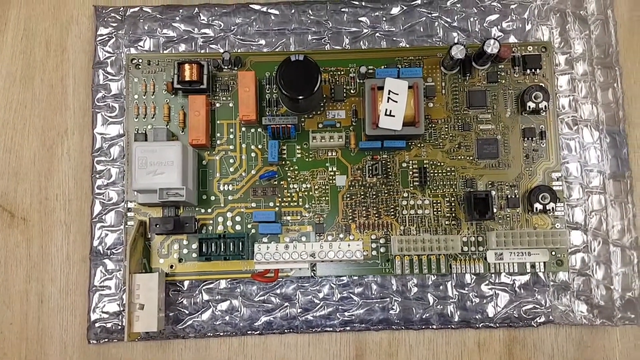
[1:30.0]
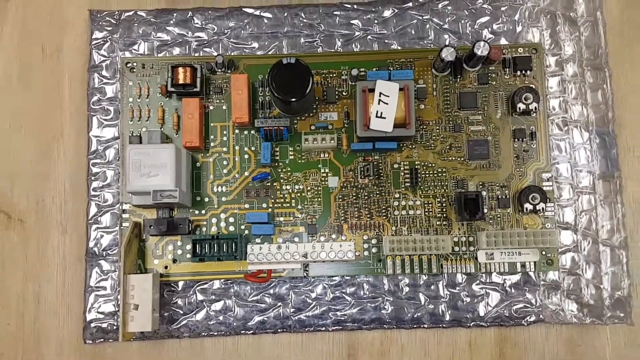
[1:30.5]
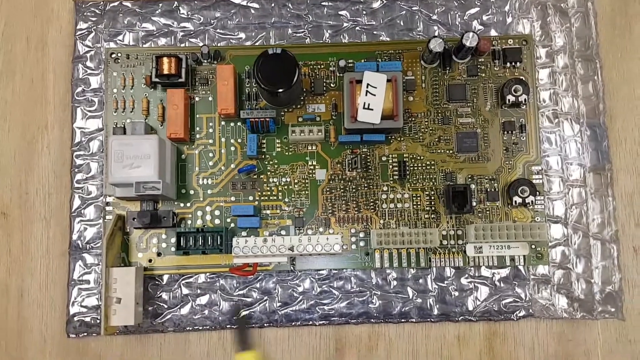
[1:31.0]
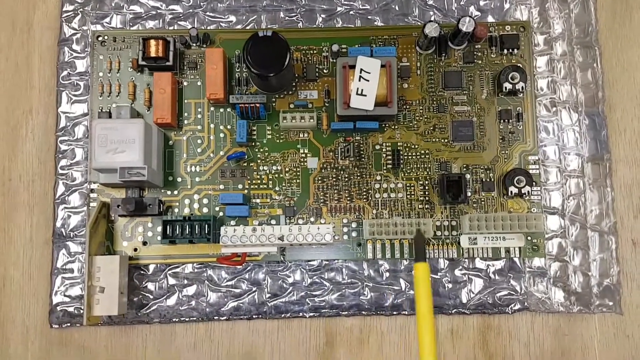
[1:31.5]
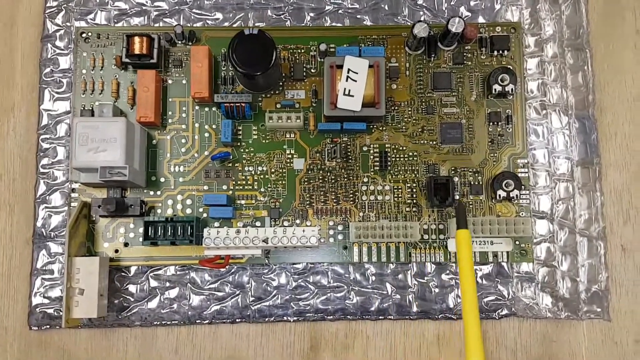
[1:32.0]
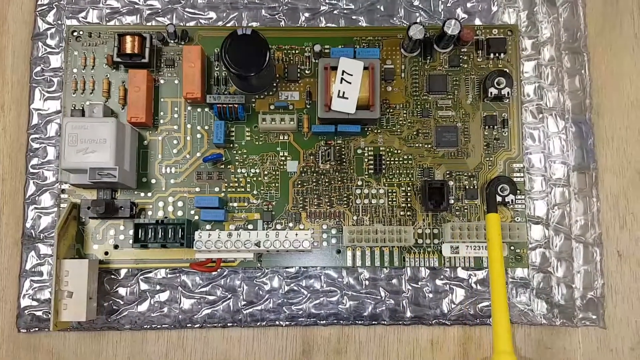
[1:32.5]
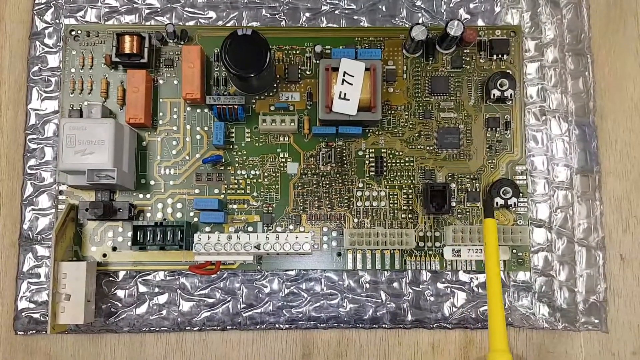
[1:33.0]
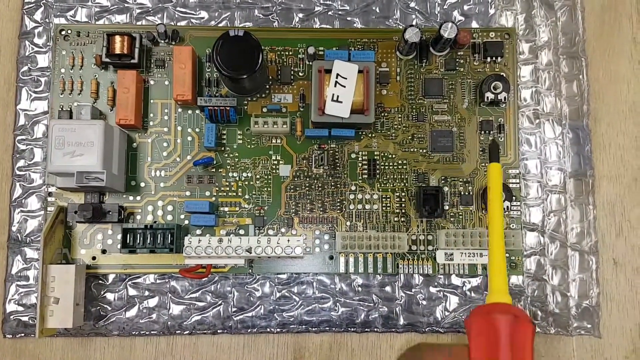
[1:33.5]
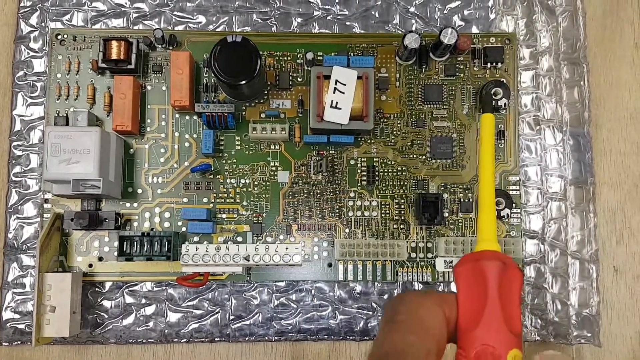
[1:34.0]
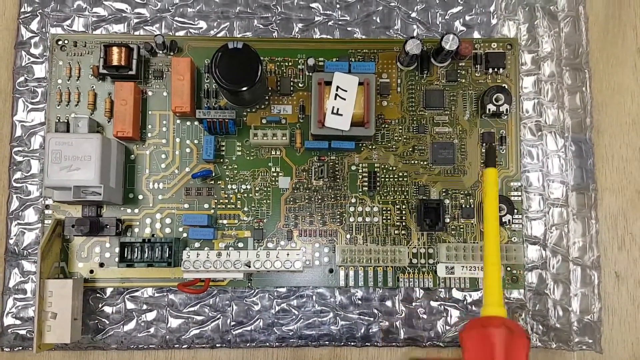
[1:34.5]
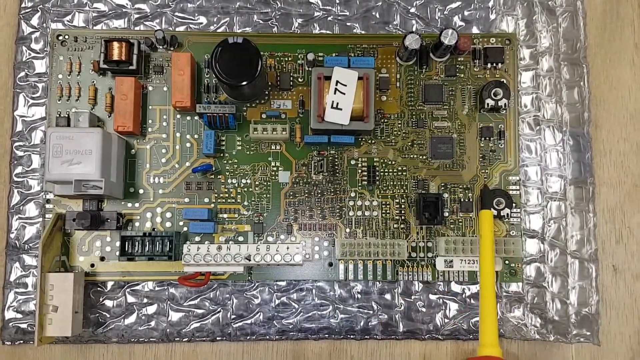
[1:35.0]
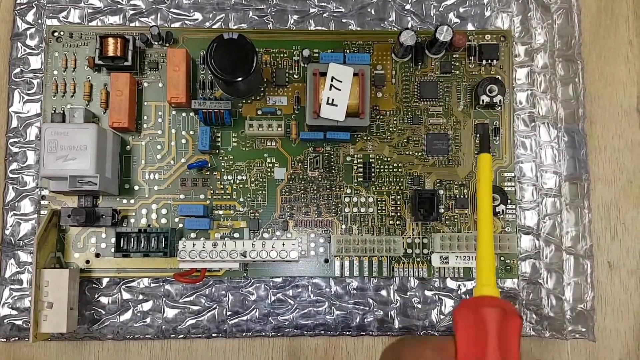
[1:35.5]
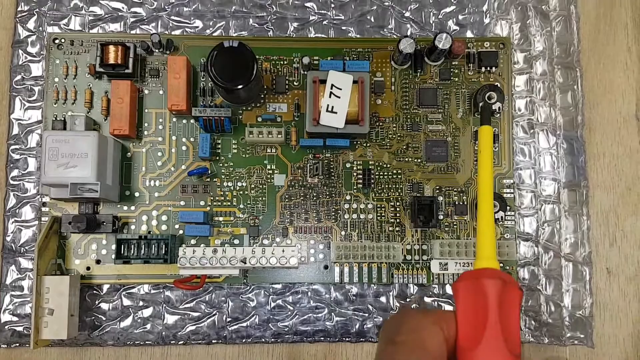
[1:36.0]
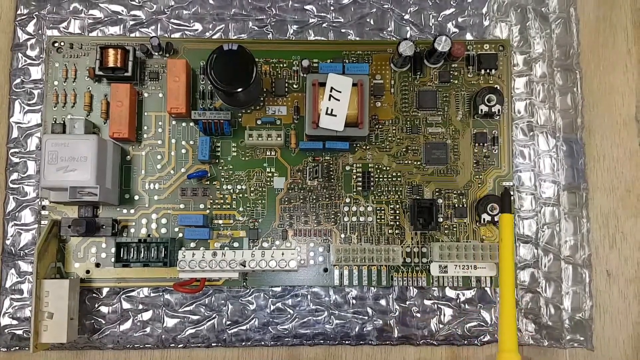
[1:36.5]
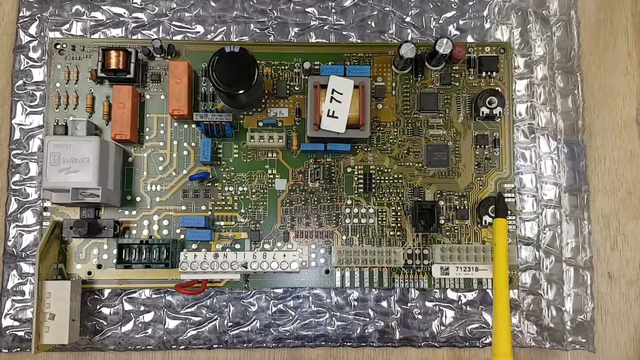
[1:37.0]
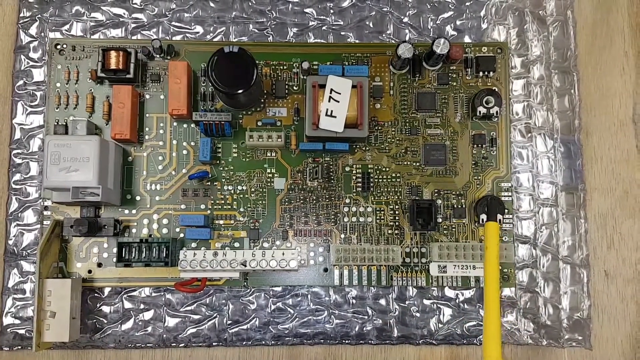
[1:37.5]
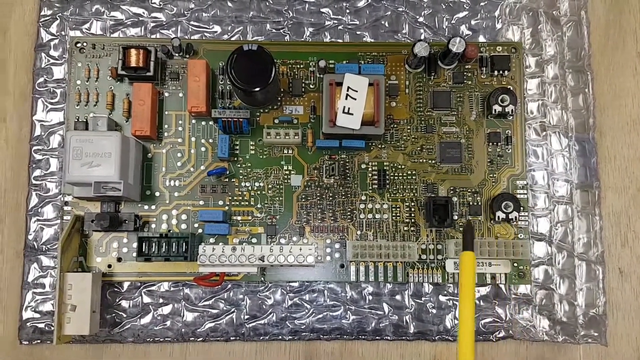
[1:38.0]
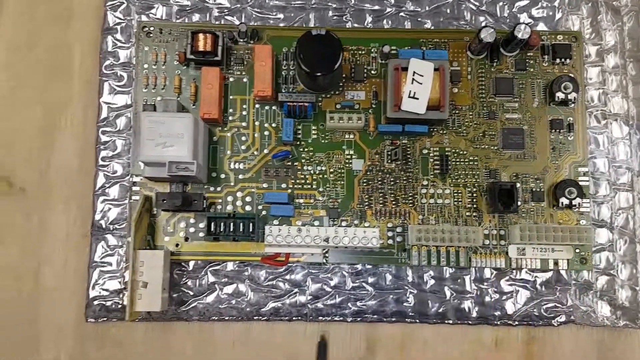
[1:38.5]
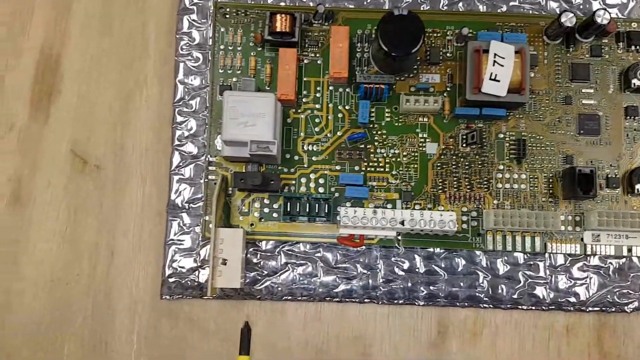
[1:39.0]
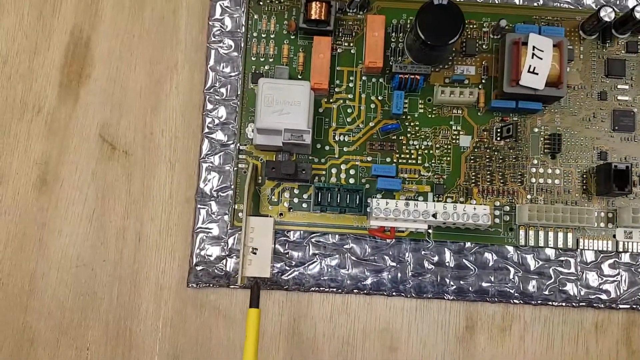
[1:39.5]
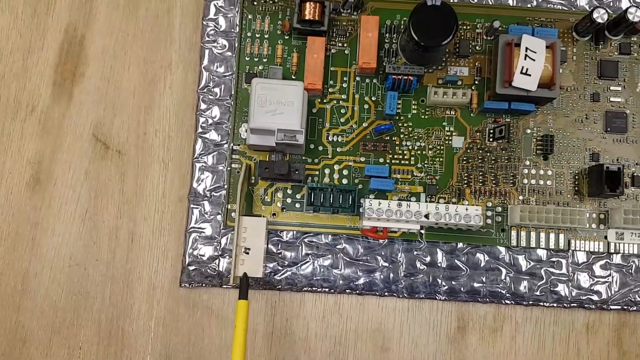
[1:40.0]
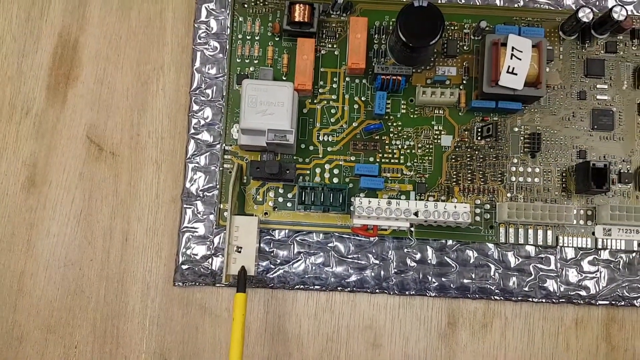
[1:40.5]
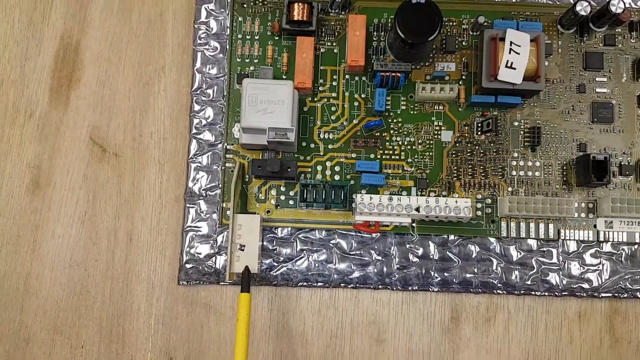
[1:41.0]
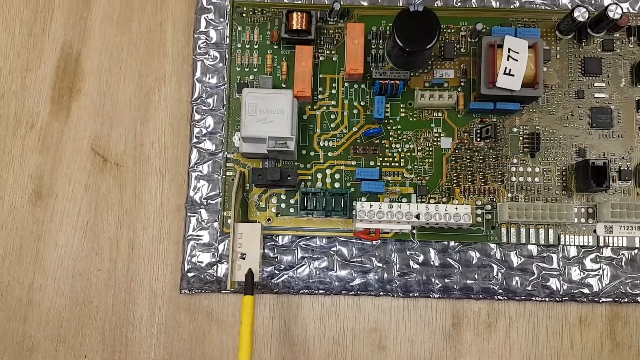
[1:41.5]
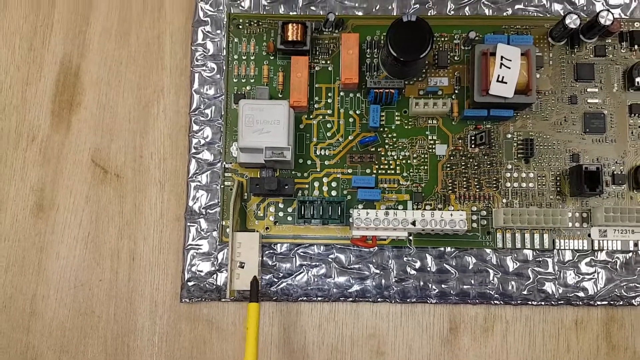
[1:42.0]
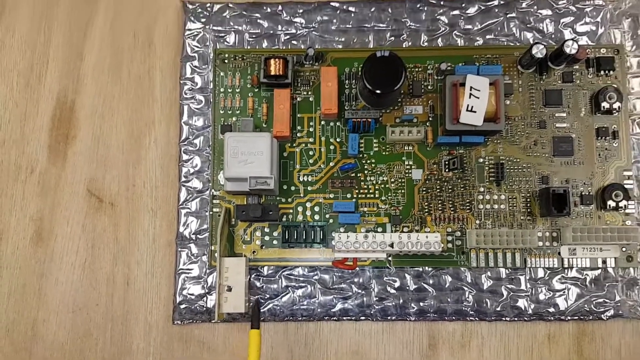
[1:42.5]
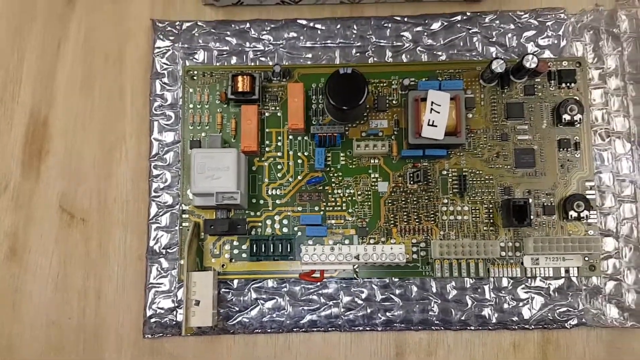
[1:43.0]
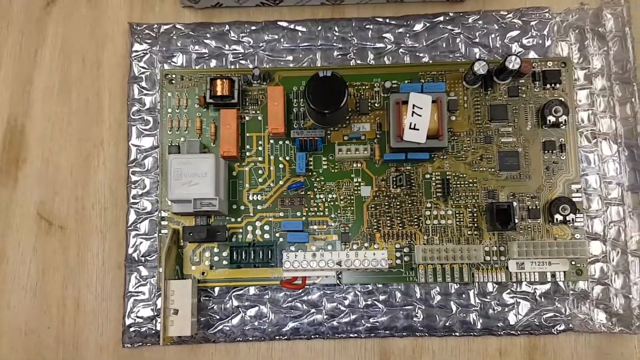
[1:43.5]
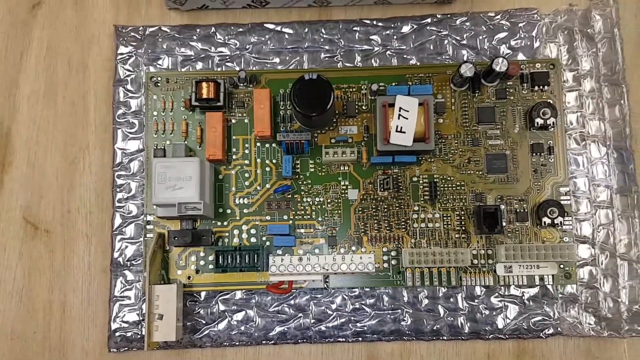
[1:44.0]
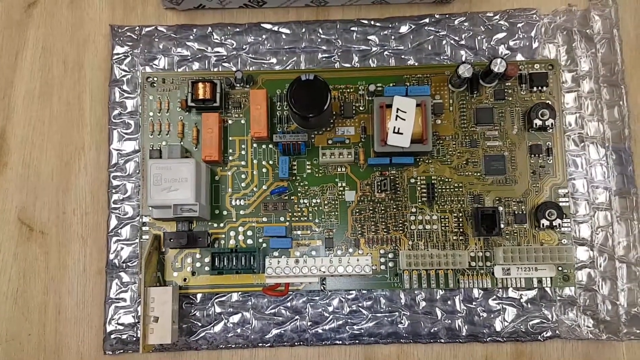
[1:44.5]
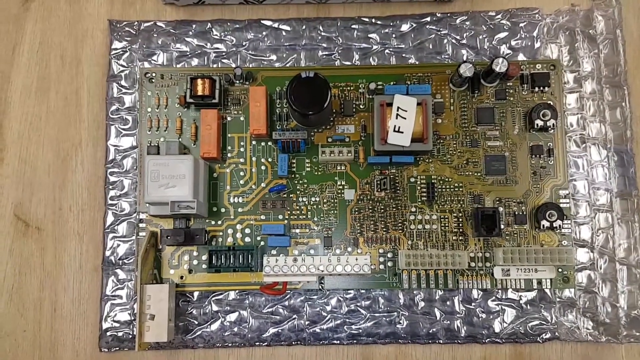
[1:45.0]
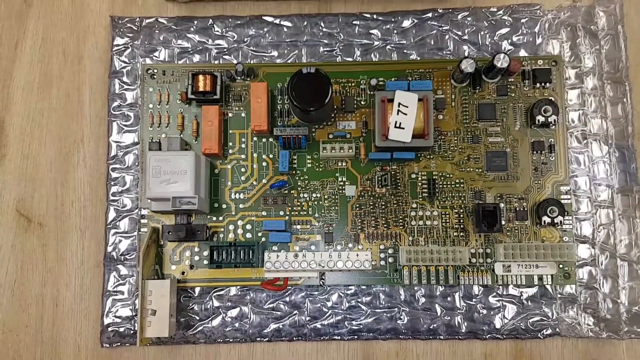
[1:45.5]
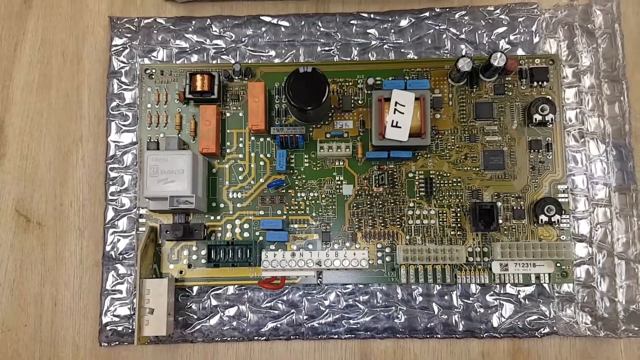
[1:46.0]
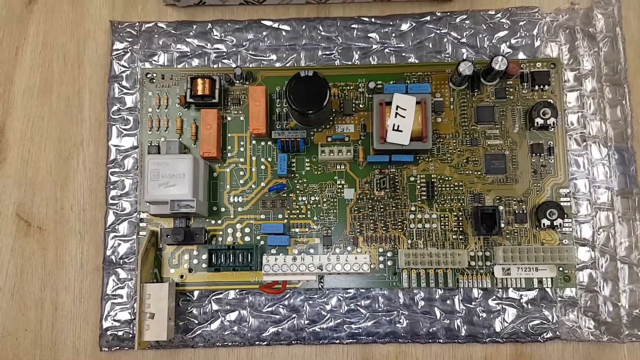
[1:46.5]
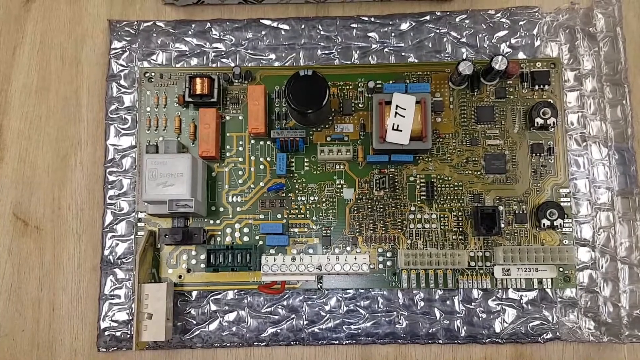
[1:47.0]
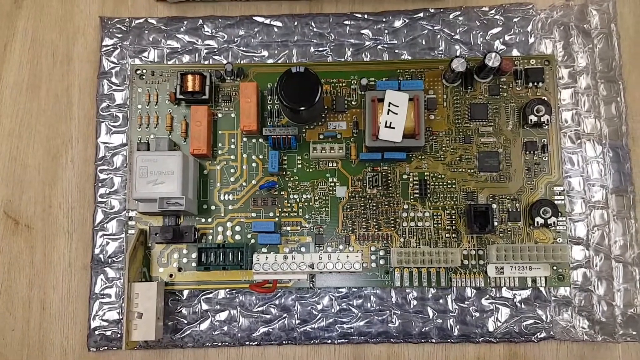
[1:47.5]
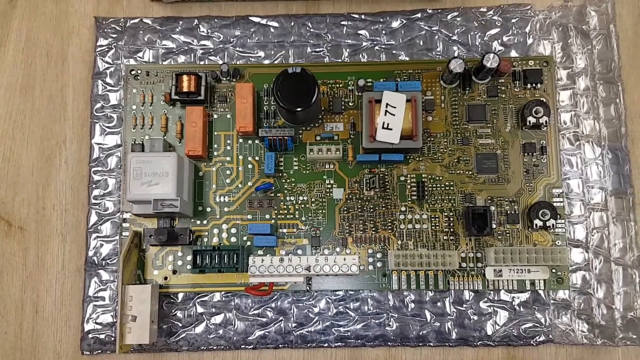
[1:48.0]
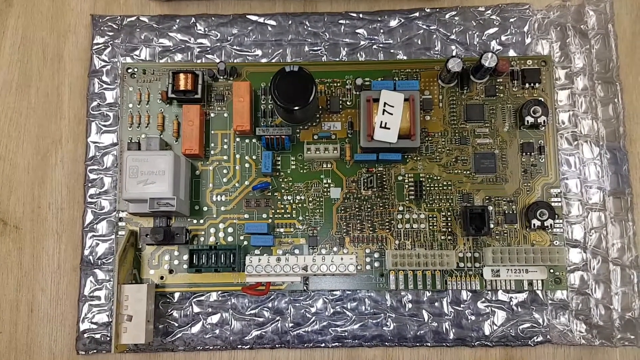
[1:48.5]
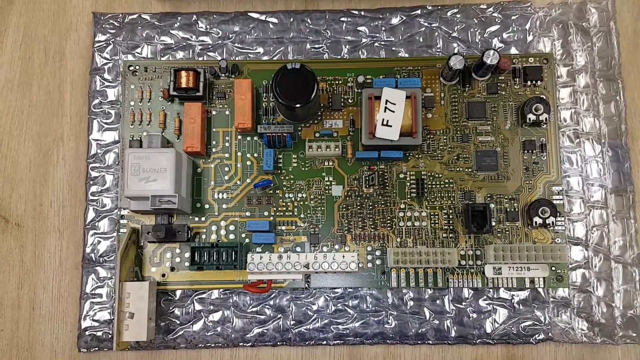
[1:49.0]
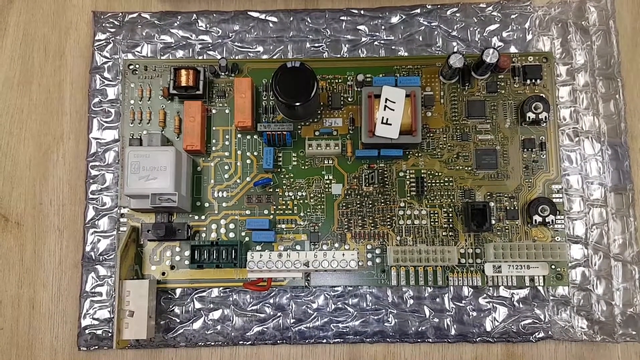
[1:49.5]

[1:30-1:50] The internals and circuit board of the device are shown. The person presenting uses the tip of a screwdriver to point to different parts of the circuit board: first two similar parts, then a tan-colored rectangular component. The circuit board looks complicated and resembles a modern circuit board, with many different things on it; it looks like a miniature model of a city with factories, traffic and parking lots.